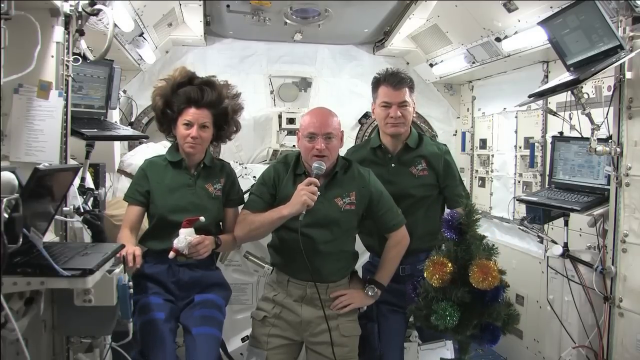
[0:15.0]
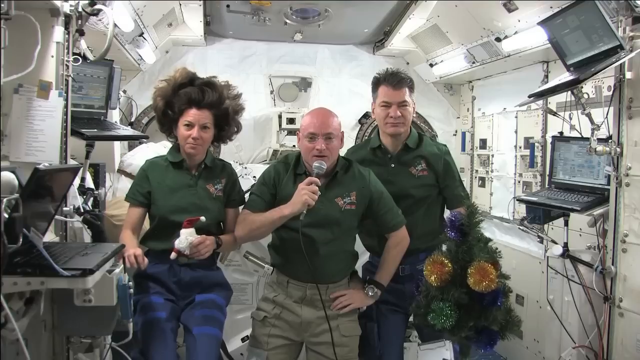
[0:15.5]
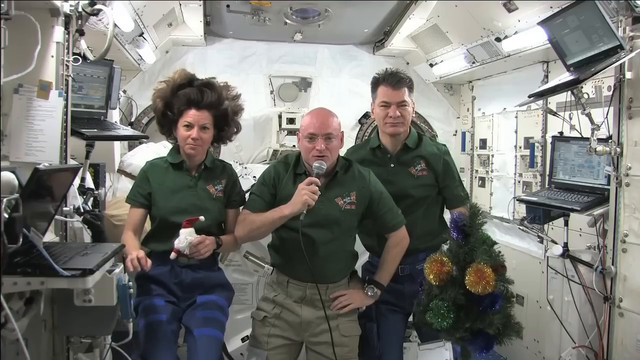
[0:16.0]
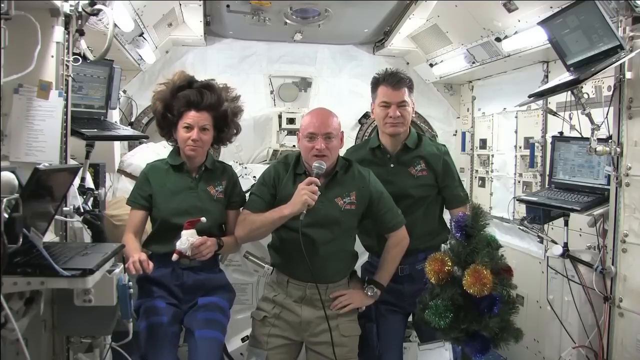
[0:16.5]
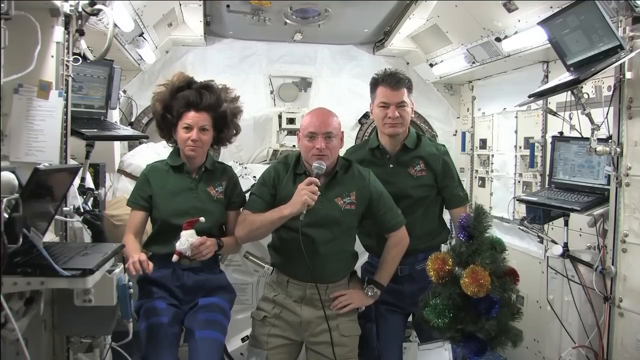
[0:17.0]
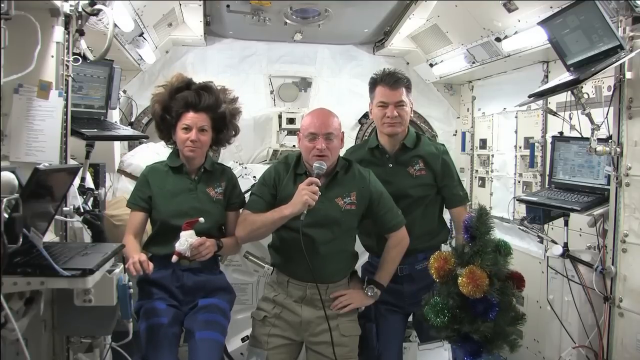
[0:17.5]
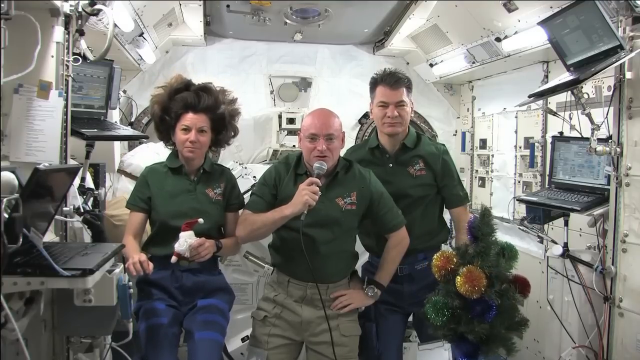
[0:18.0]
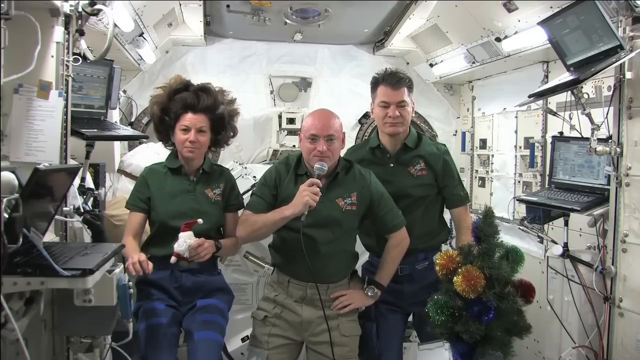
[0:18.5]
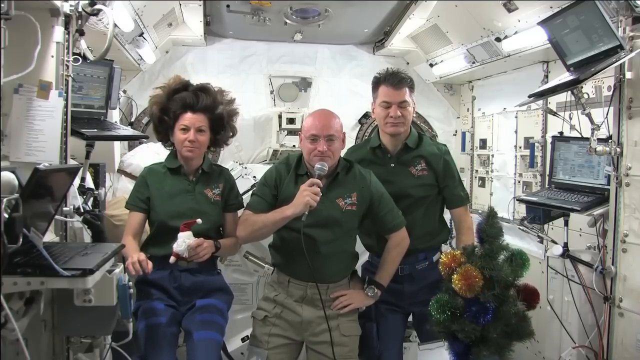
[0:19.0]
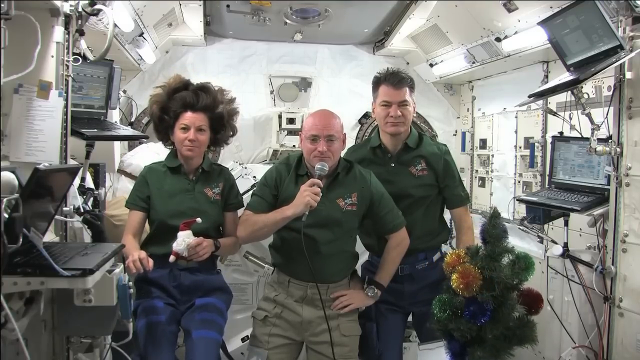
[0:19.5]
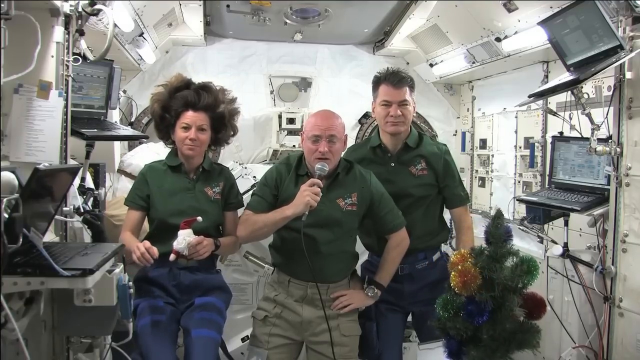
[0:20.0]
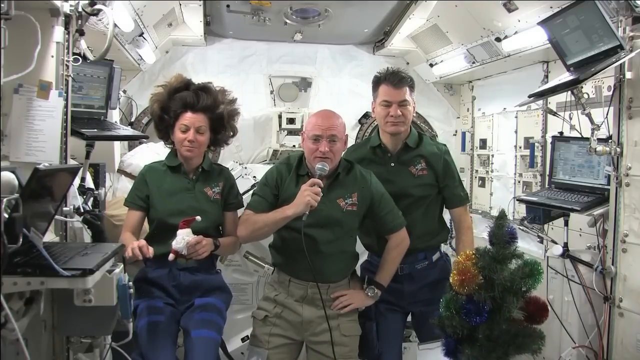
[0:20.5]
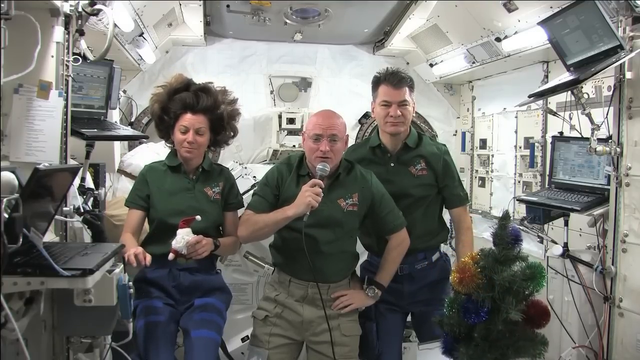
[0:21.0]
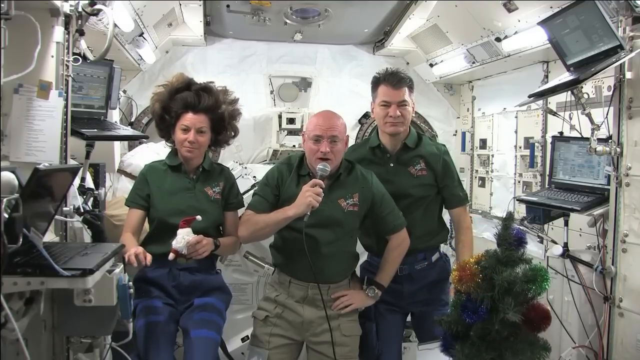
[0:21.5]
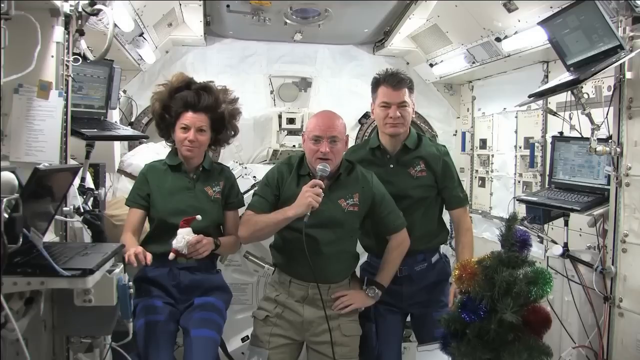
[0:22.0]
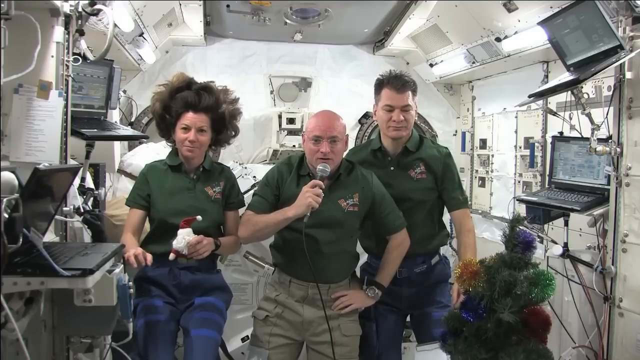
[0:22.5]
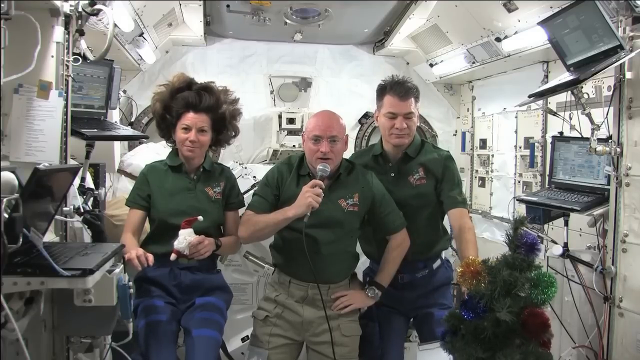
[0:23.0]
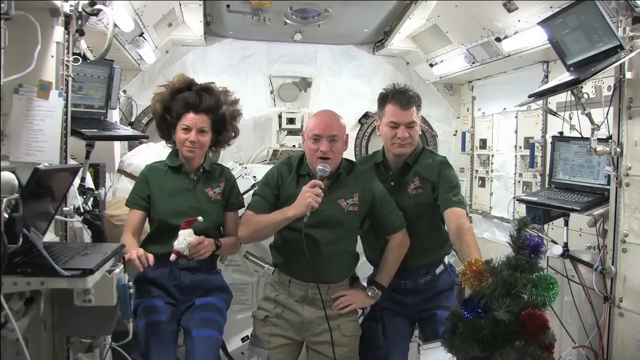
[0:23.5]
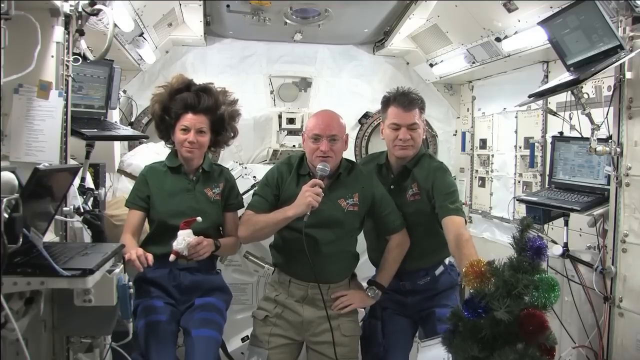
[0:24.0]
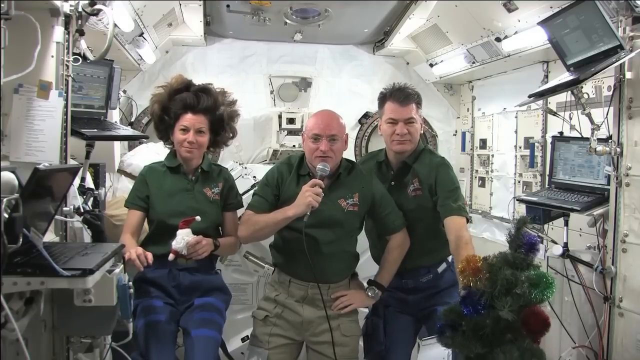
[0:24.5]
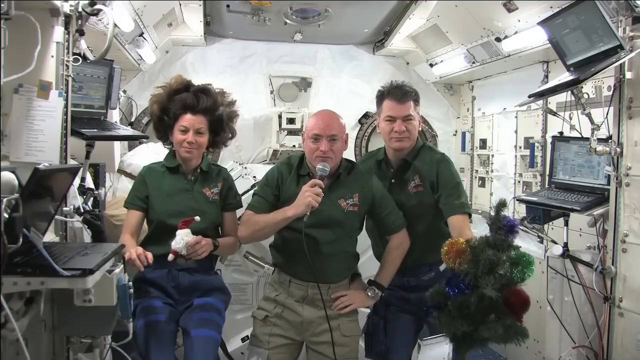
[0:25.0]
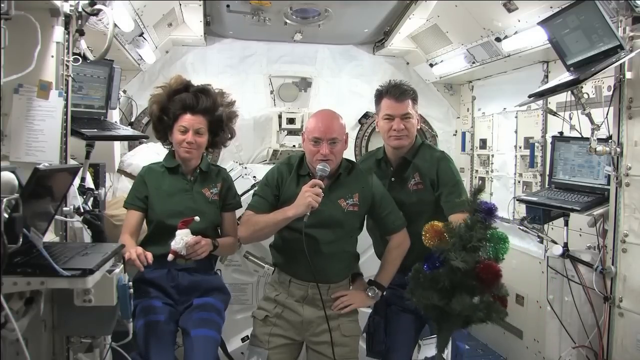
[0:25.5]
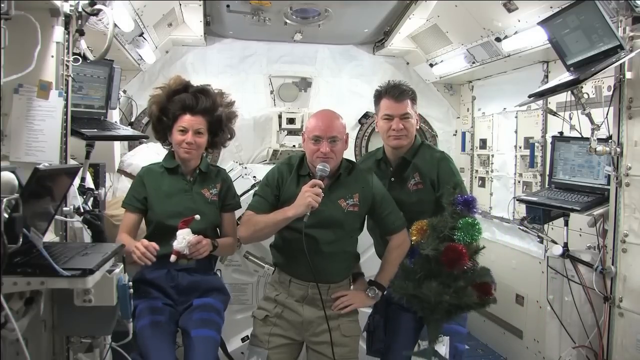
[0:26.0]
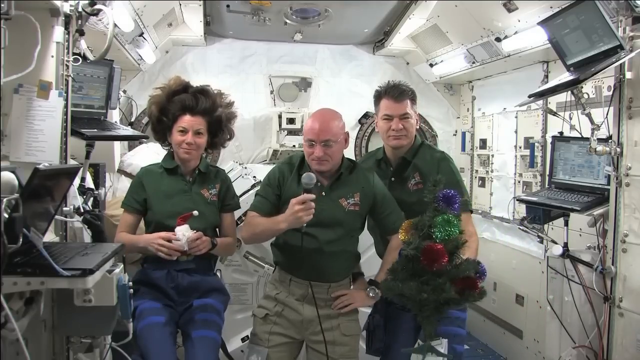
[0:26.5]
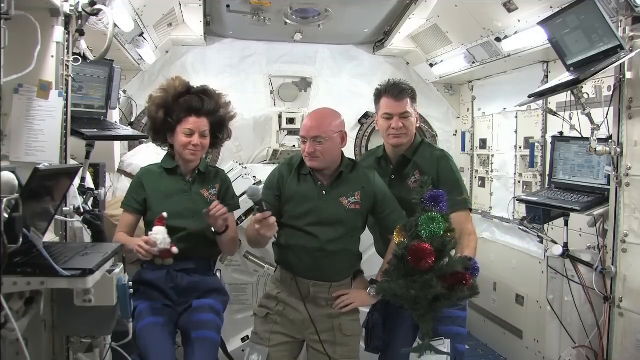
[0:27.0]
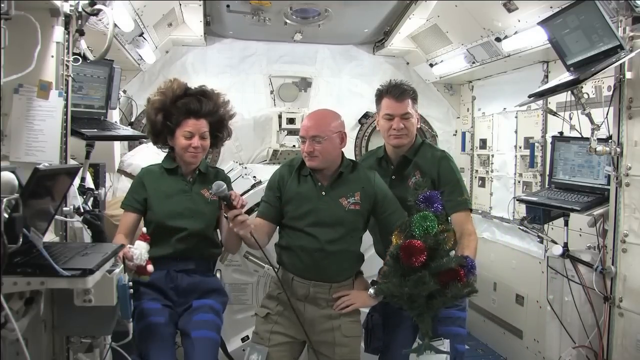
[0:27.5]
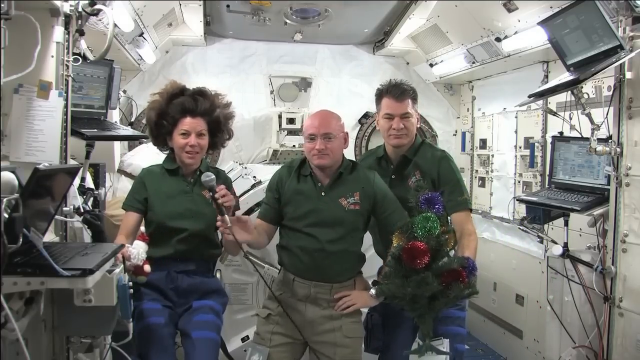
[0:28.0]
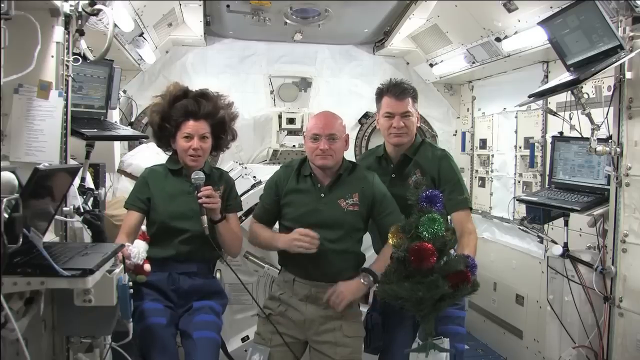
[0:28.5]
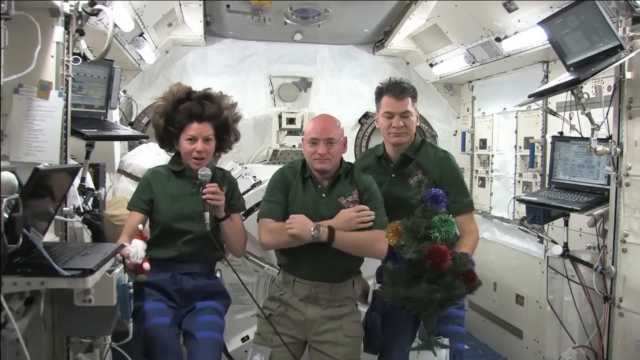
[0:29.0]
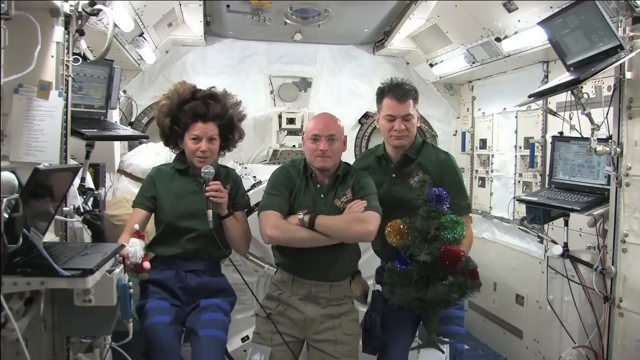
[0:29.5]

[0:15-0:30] Three astronauts float in zero gravity, apparently on a spaceship. Numerous pieces of equipment and computer terminals are behind them, with a very sterile and mechanical look in tones of gray and white. All three wear dark green collared short-sleeved polo shirts. The woman on the left wears dark blue pants, the man in the middle wears khaki pants, and the man on the right appears to be wearing dark pants as well. The woman's hair floats around her head in the zero gravity; she holds a small Santa Claus doll in her left hand and wears a watch on her left wrist. The bald man in the middle has a watch on his left wrist, places his left hand on his left hip, and holds a microphone in his right hand. The man on the far right has short dark hair. In front of him is a small, obviously artificial Christmas tree floating in the zero gravity; it is green with areas of metallic gold and purple.